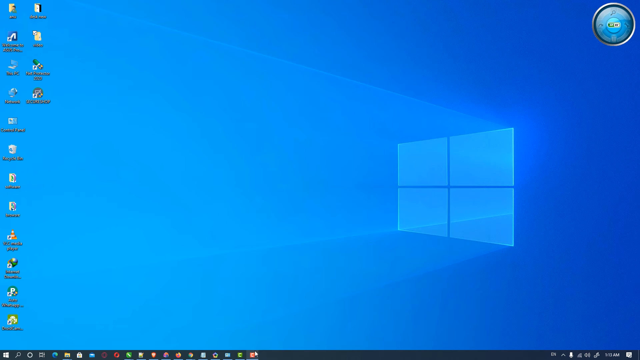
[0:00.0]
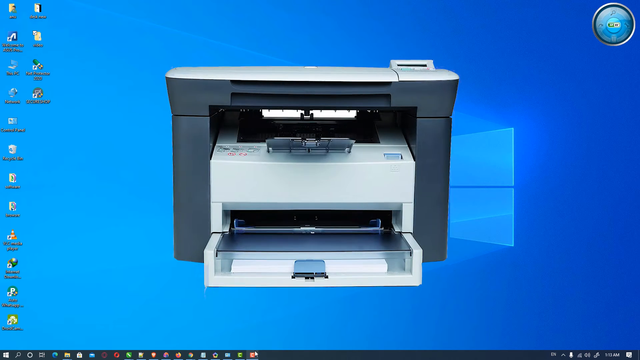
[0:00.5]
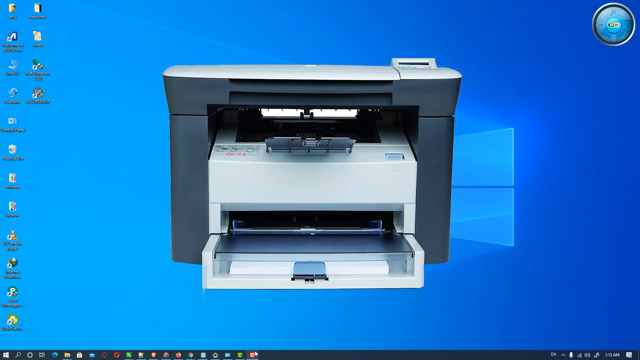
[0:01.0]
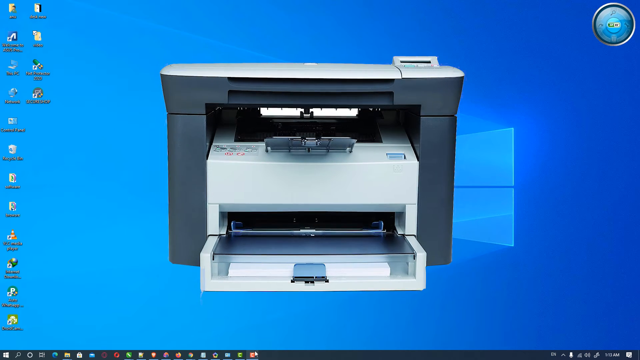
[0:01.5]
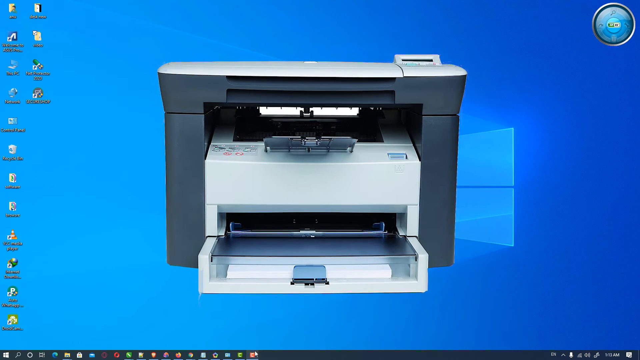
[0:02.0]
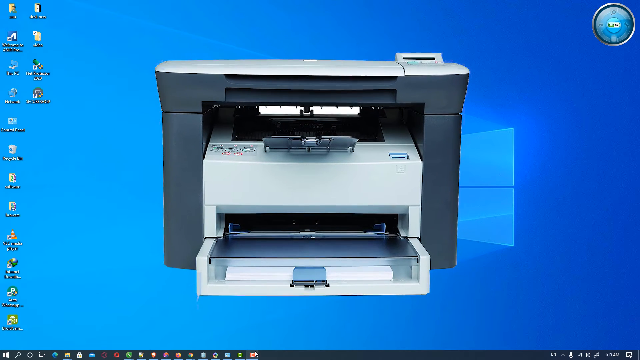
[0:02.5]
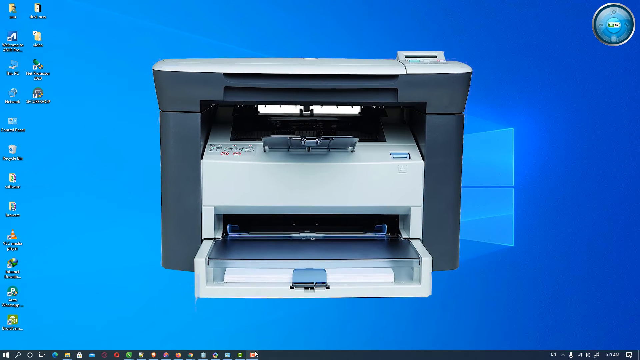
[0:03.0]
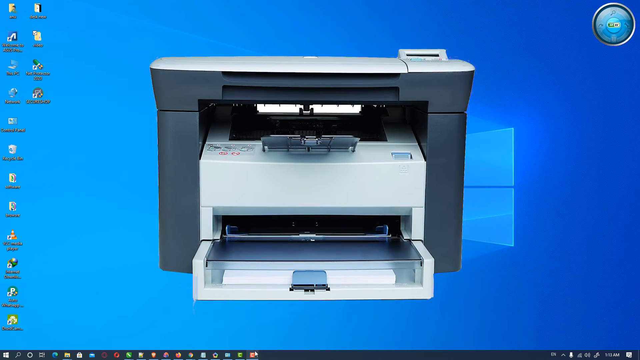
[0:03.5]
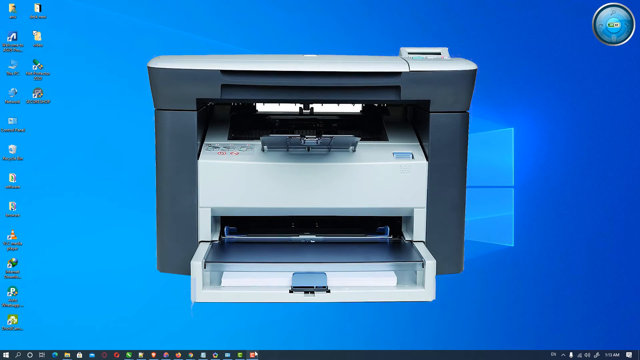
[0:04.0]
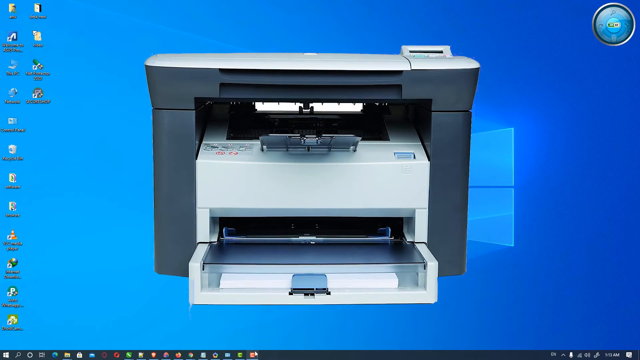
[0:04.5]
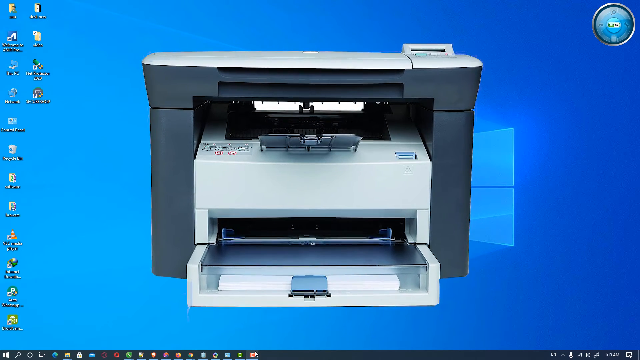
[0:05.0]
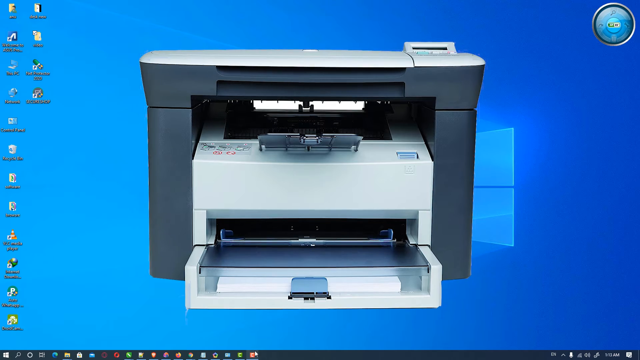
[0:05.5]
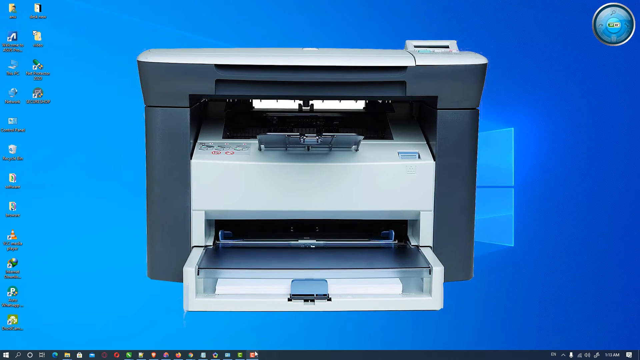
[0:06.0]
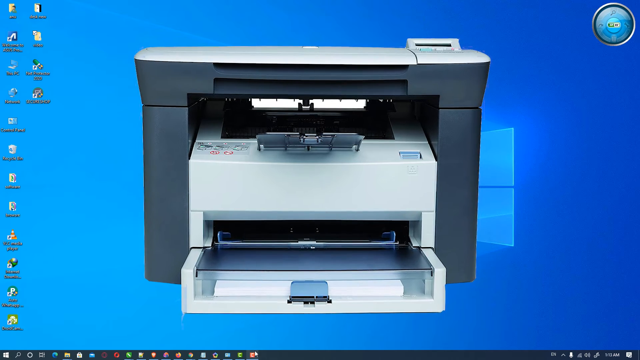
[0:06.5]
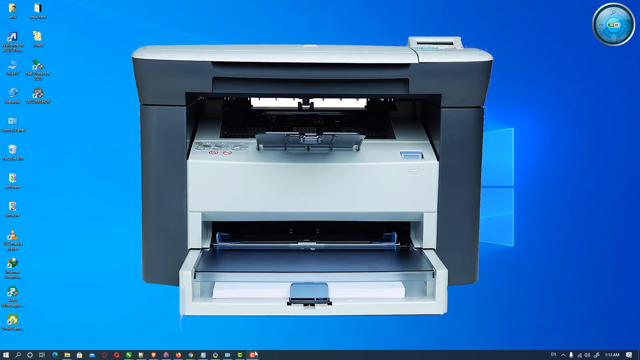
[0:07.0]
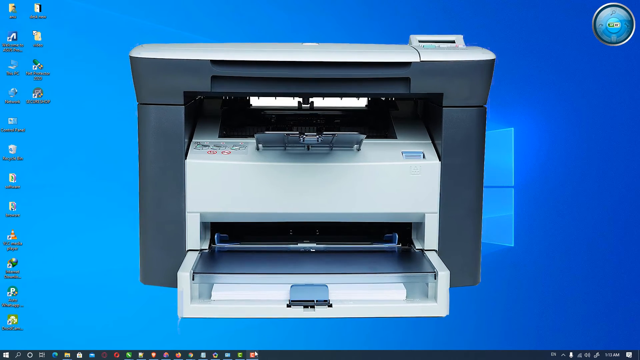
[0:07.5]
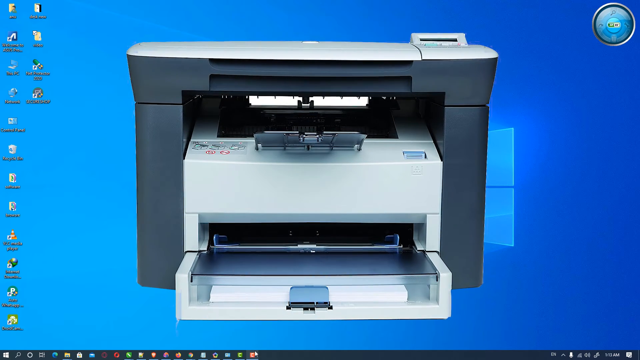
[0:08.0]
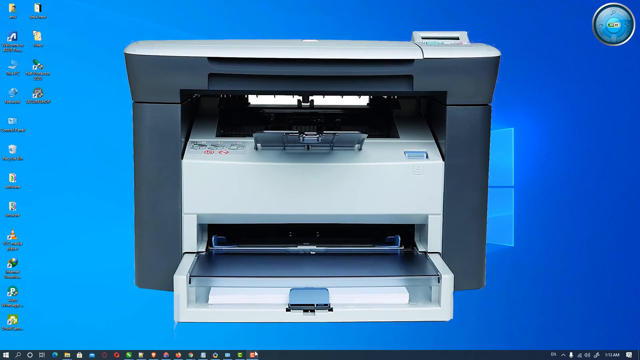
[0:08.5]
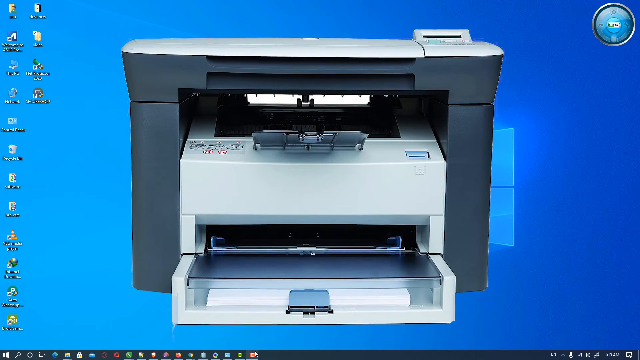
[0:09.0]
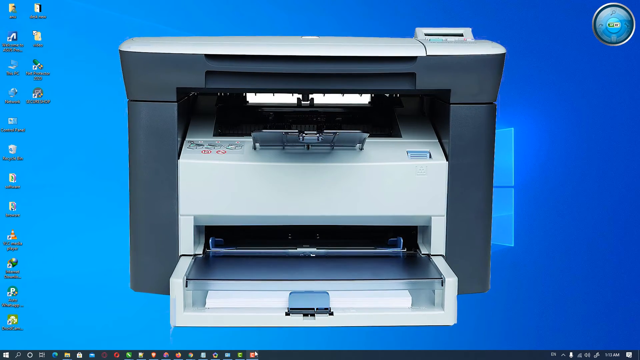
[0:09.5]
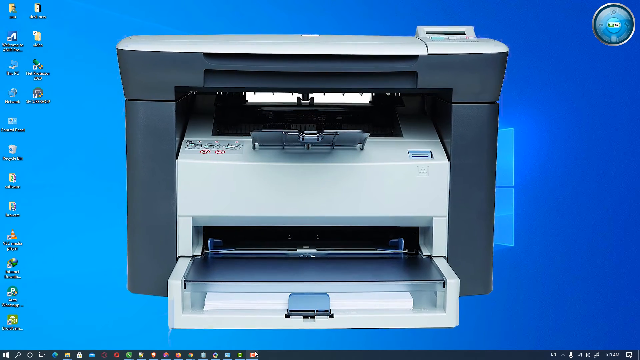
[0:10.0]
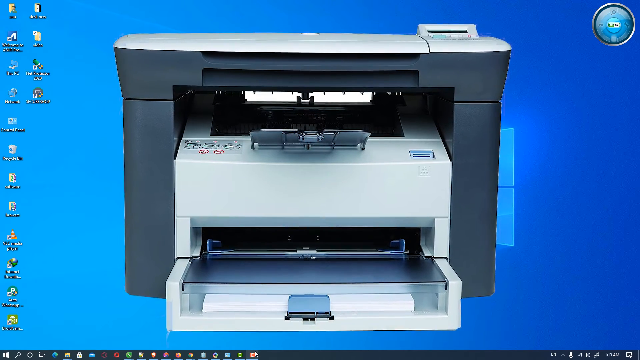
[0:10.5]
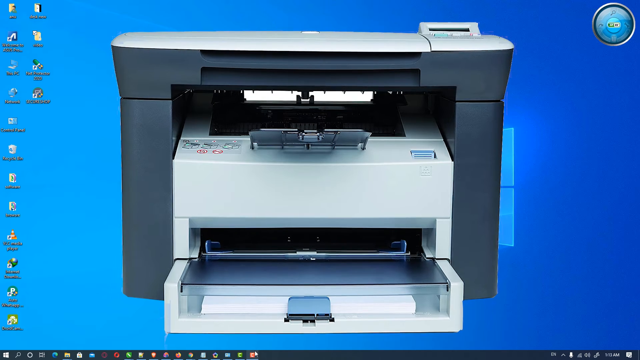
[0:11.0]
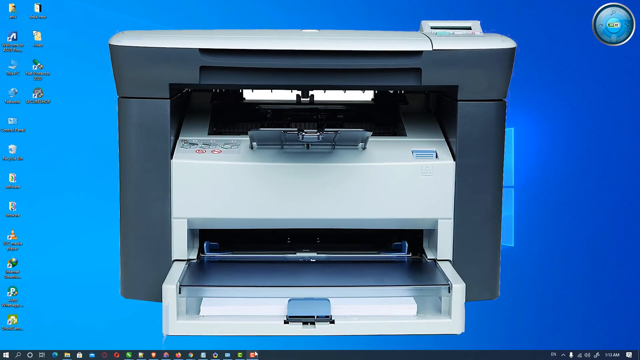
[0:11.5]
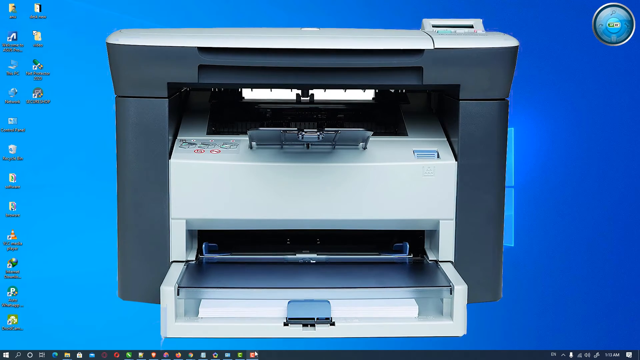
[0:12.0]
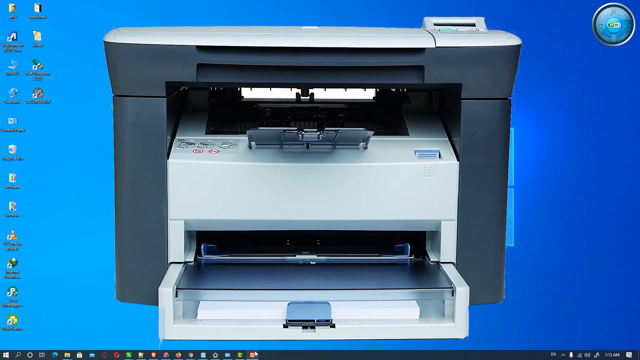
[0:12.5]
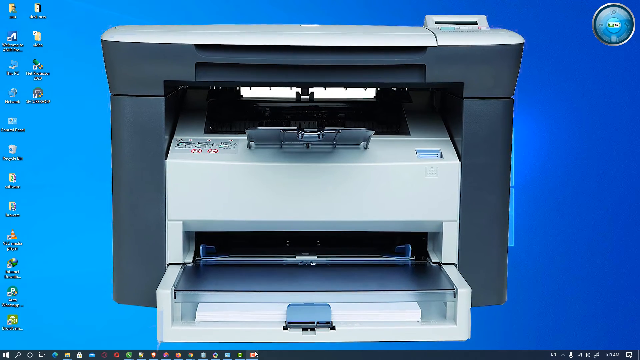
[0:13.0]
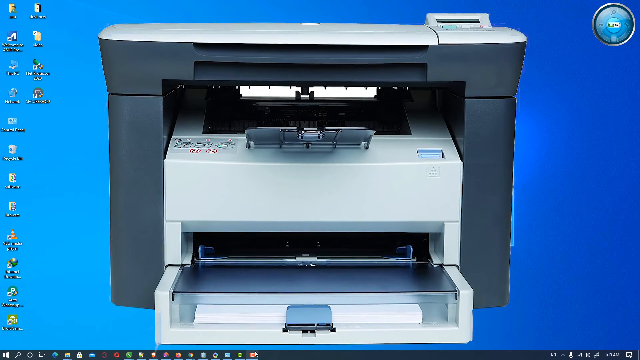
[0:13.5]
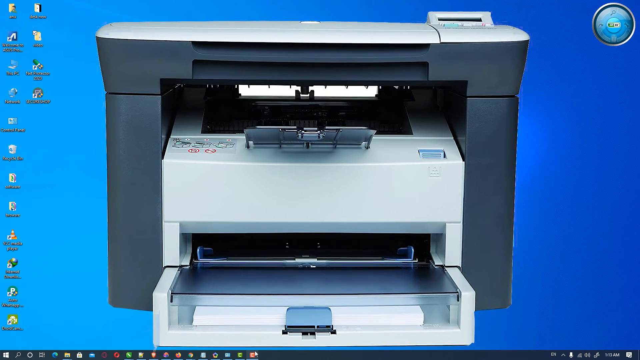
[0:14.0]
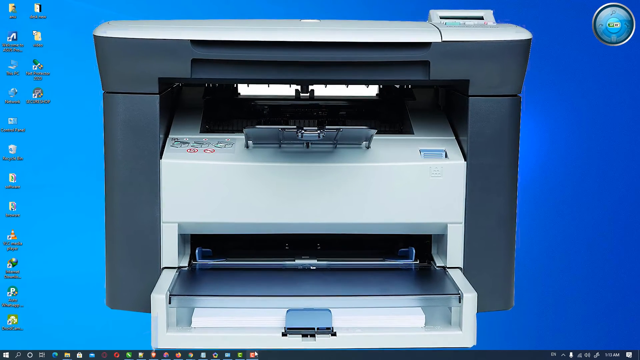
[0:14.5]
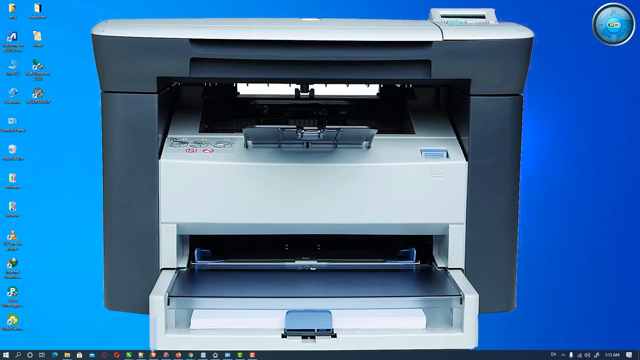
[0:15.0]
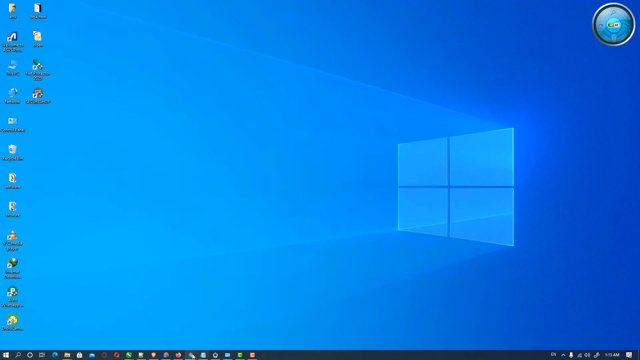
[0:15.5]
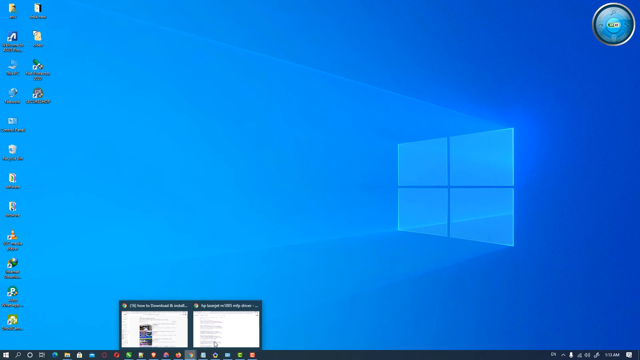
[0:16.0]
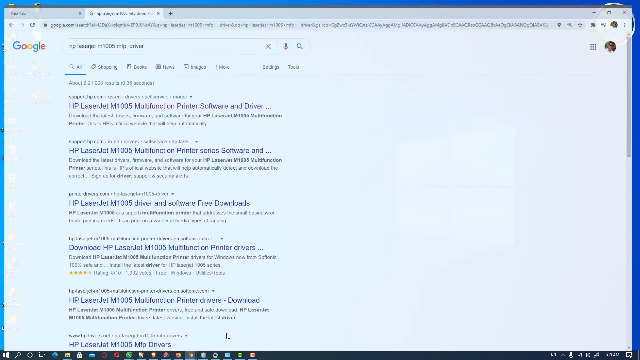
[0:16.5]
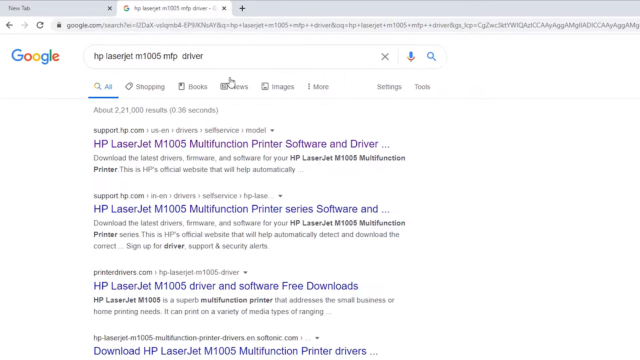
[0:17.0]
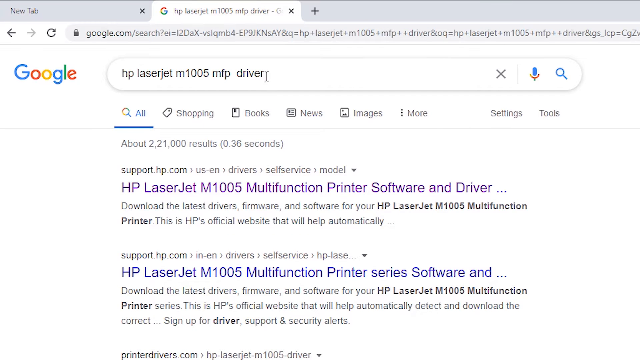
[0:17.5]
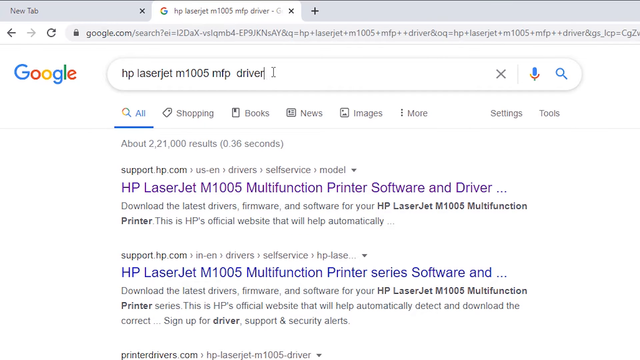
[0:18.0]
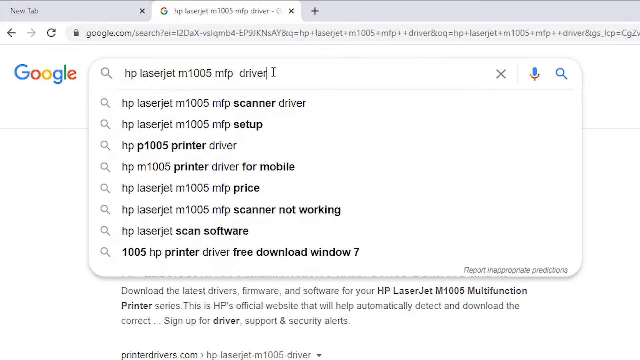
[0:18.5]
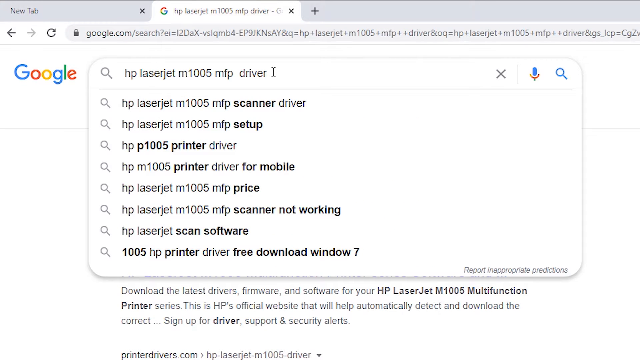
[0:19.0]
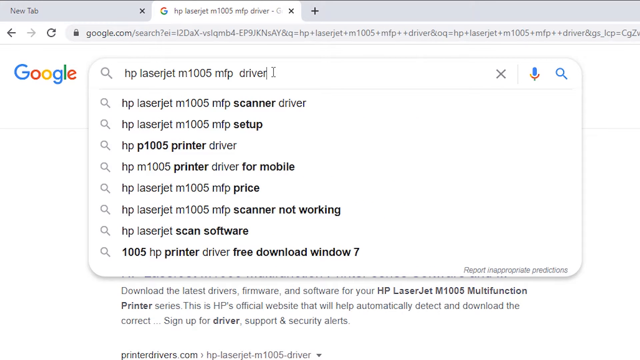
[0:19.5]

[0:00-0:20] The video, a little wider than it is tall, opens on a view of someone's desktop. On the left side are a couple of columns of icons for shortcuts and programs. The wallpaper shifts from light to medium blue toward the right, and part of the Windows icon in light blue is visible on the right. In the center, apparently a printer is overlaid on top, facing forward; it is dark gray on the outside and lighter gray on the inside and lower level. The view keeps zooming in closer and closer to the printer. The screen then transitions to Google Chrome, apparently on the second tab. A Google search for "HP LaserJet M1005 MFP Driver" has been made, with search results below, and the search box is clicked. There are two search results, and the first one, which is purple, appears to have been looked at.